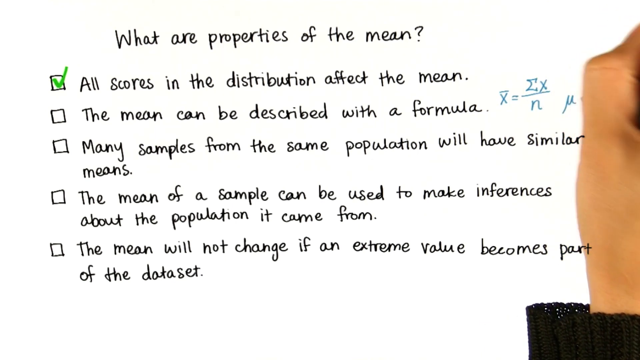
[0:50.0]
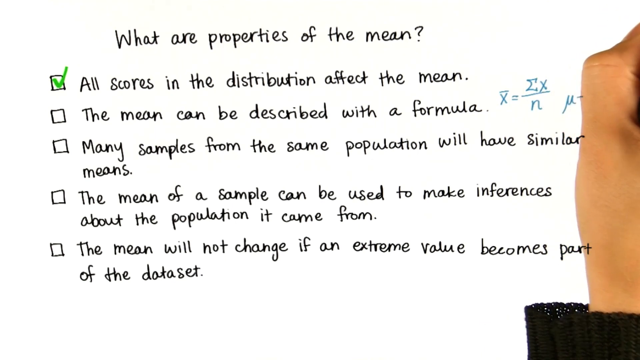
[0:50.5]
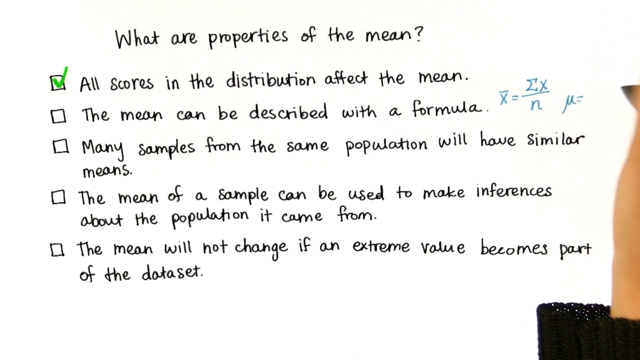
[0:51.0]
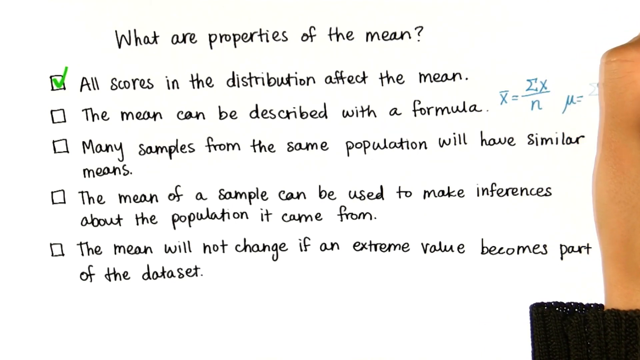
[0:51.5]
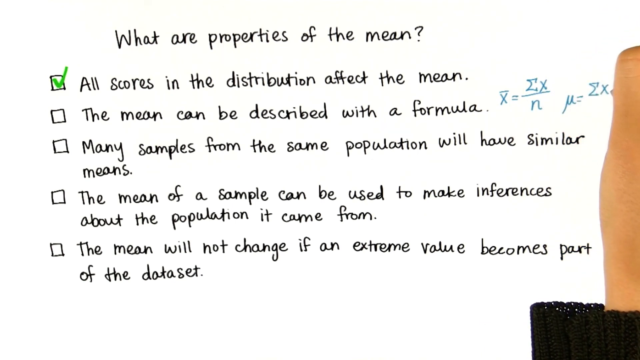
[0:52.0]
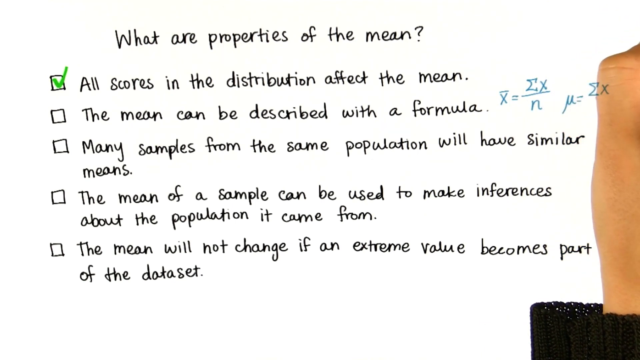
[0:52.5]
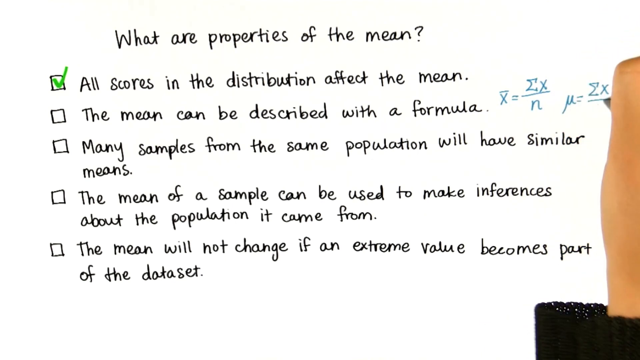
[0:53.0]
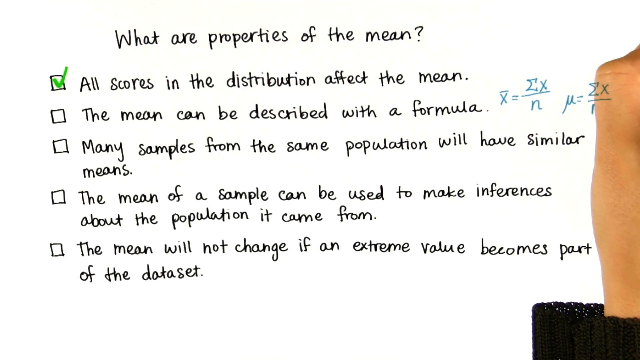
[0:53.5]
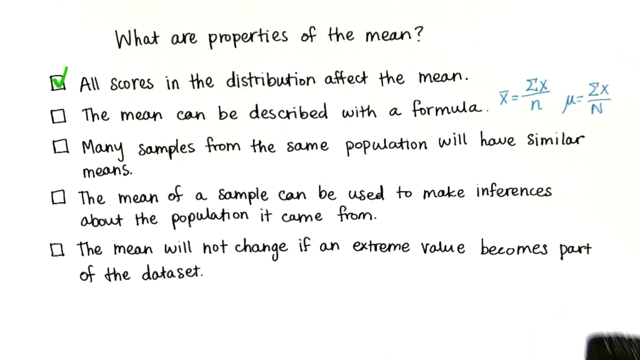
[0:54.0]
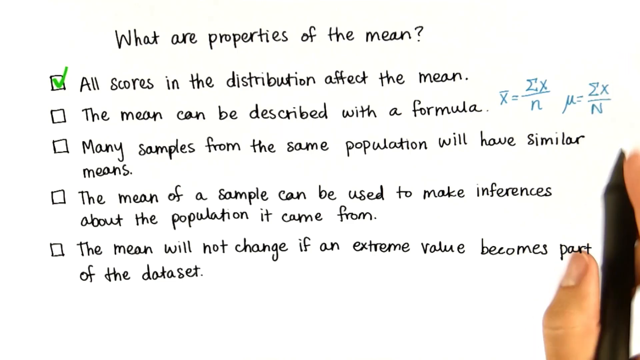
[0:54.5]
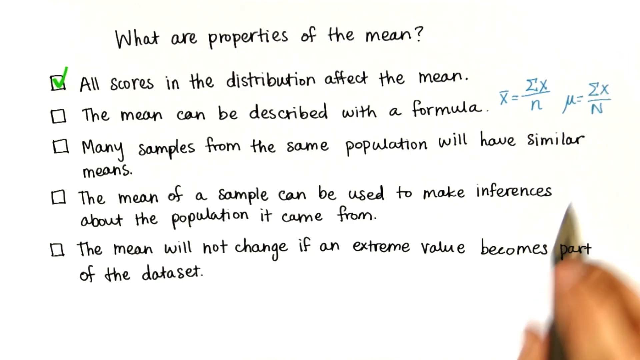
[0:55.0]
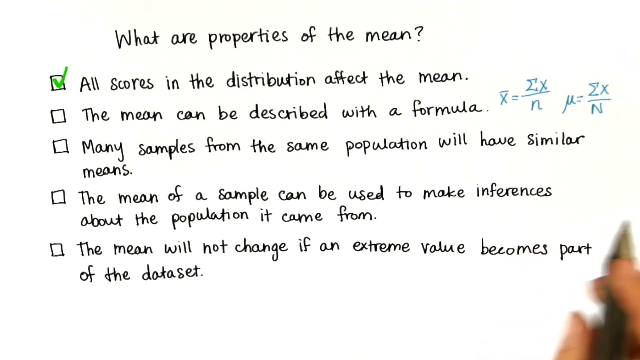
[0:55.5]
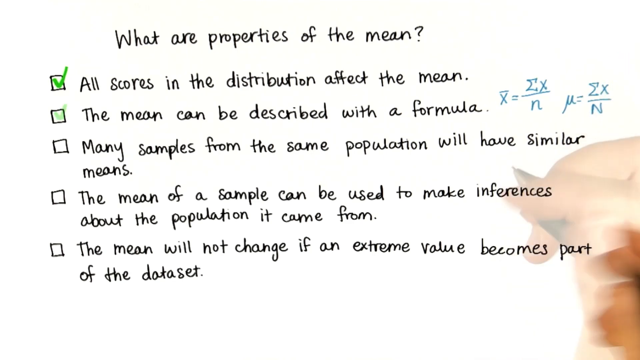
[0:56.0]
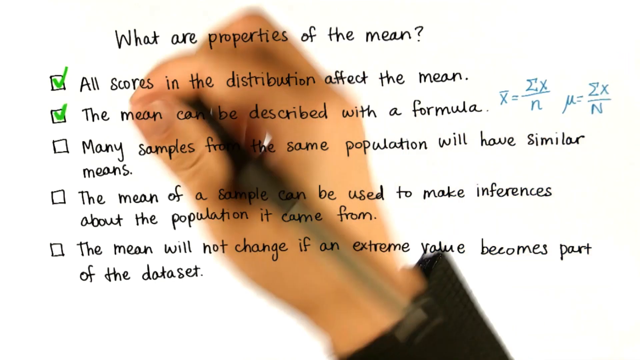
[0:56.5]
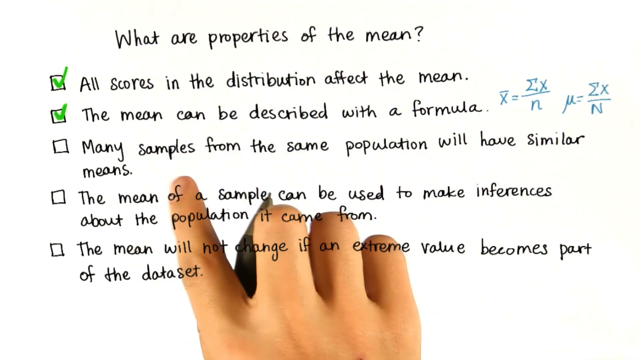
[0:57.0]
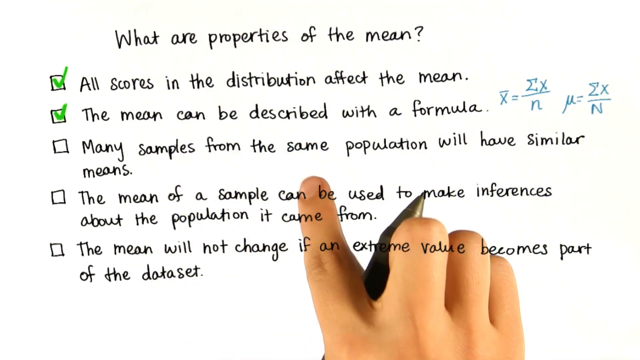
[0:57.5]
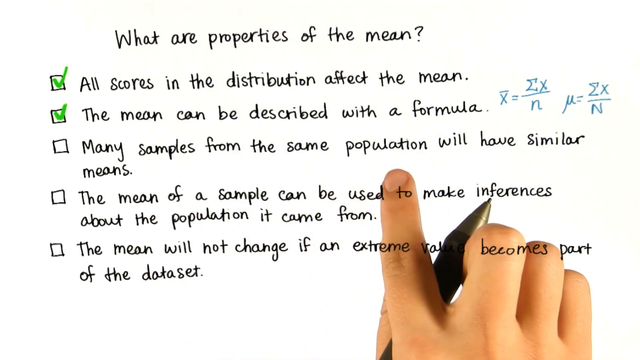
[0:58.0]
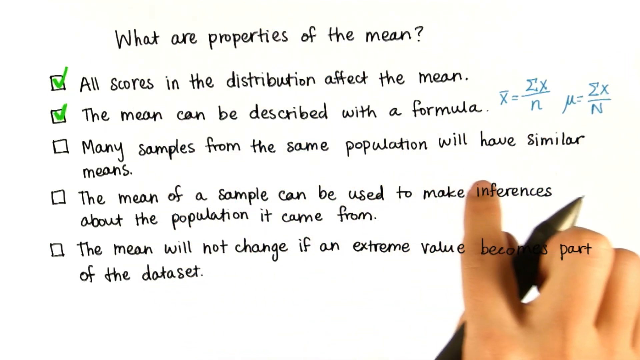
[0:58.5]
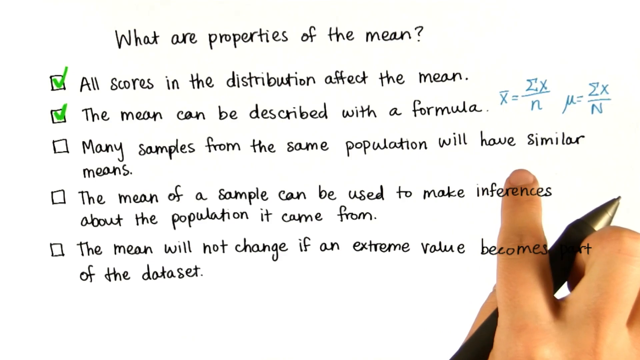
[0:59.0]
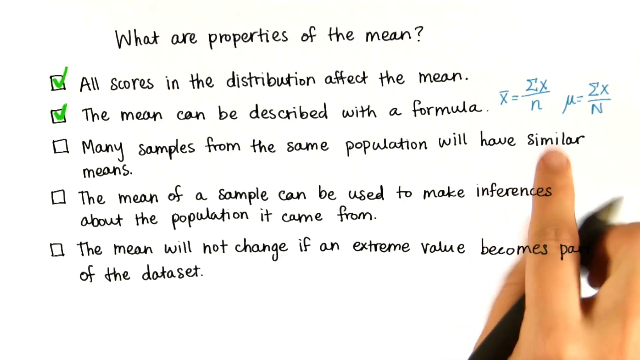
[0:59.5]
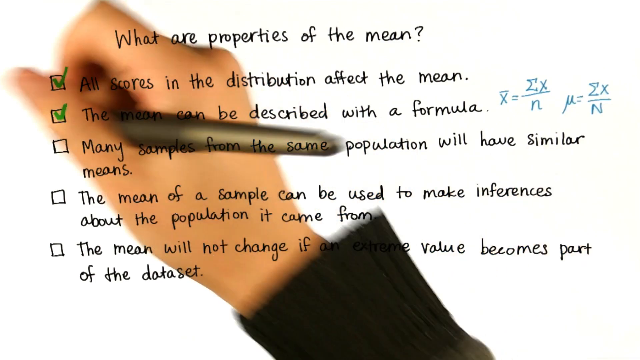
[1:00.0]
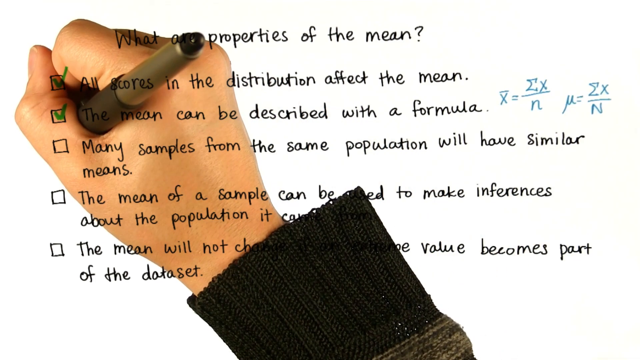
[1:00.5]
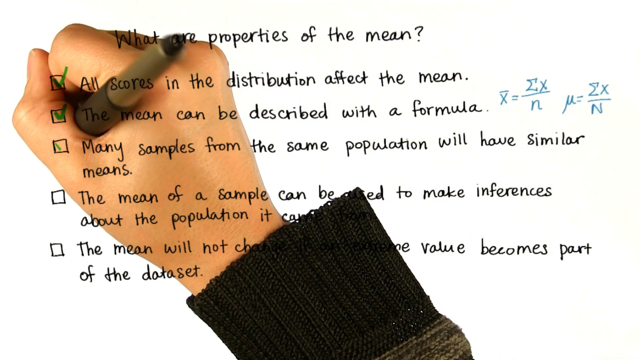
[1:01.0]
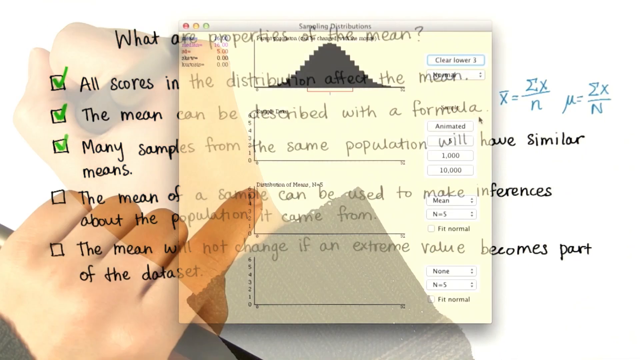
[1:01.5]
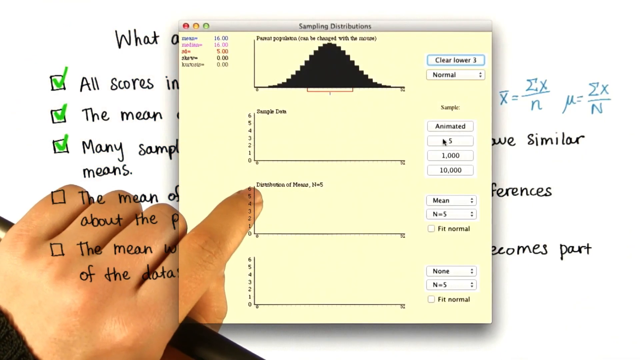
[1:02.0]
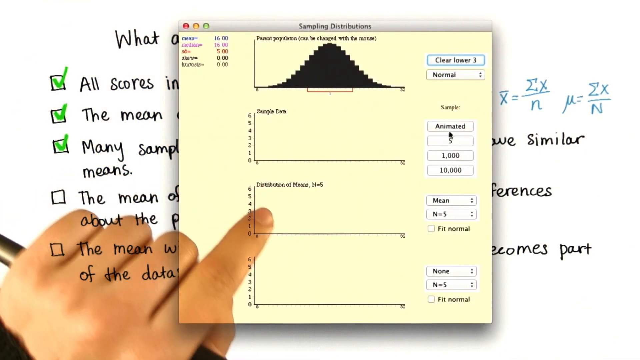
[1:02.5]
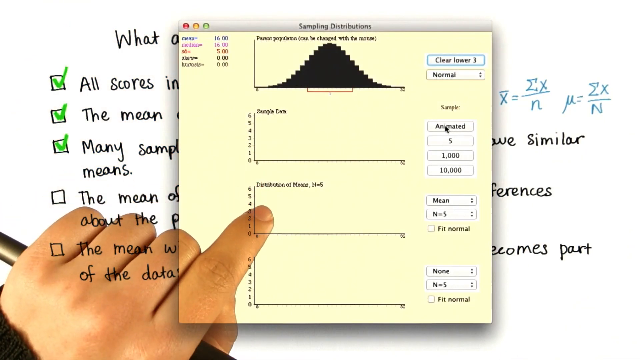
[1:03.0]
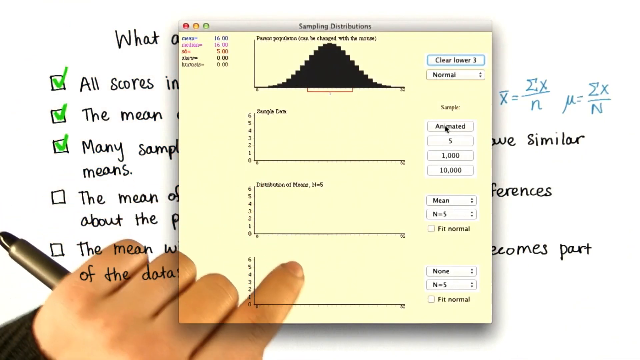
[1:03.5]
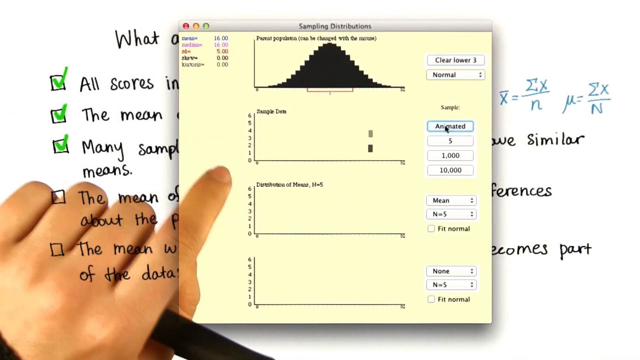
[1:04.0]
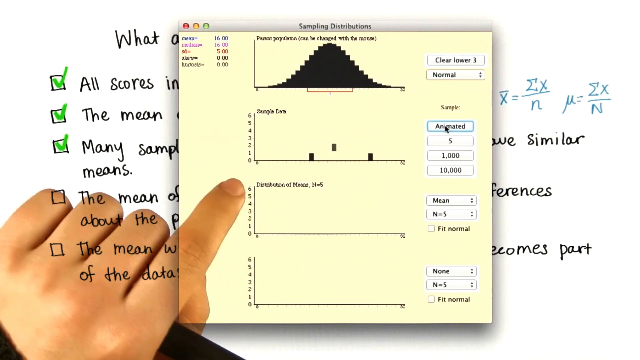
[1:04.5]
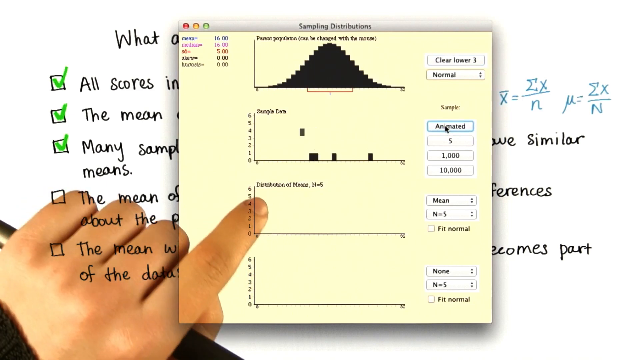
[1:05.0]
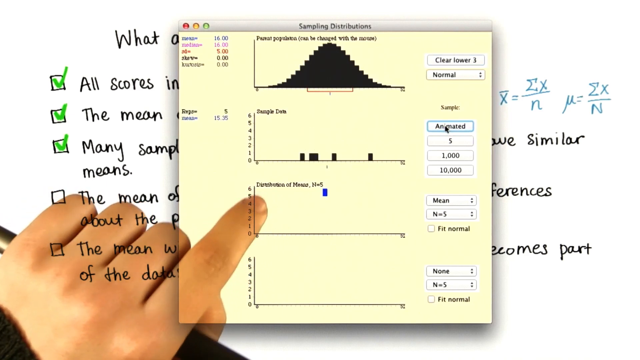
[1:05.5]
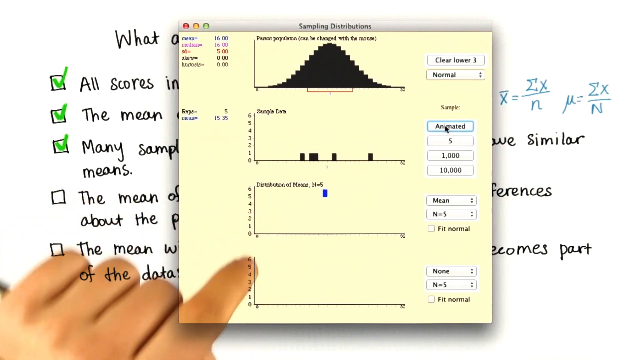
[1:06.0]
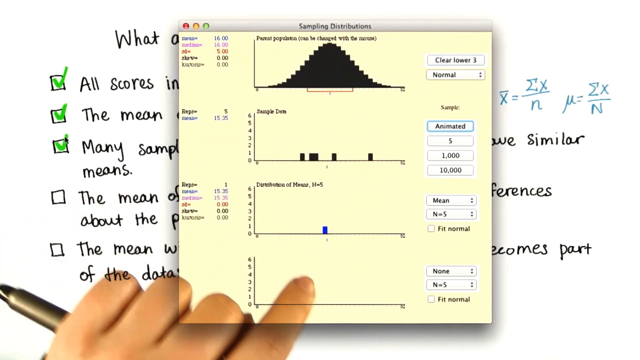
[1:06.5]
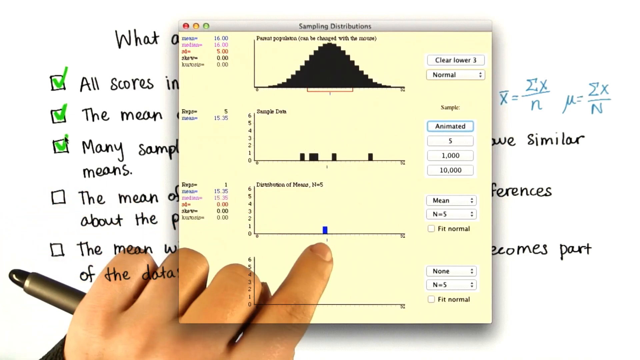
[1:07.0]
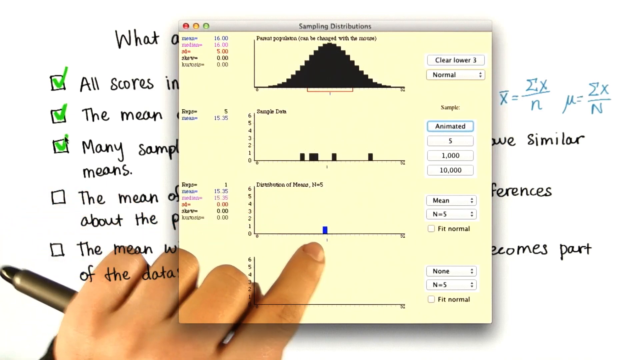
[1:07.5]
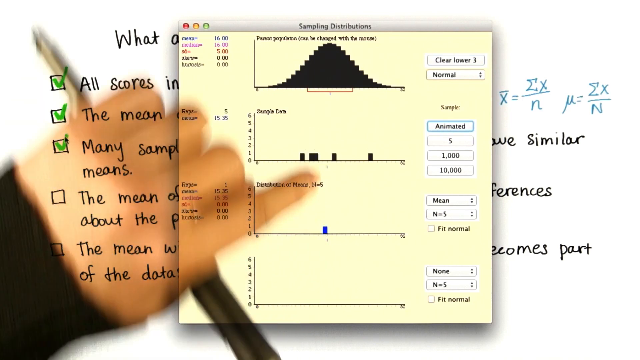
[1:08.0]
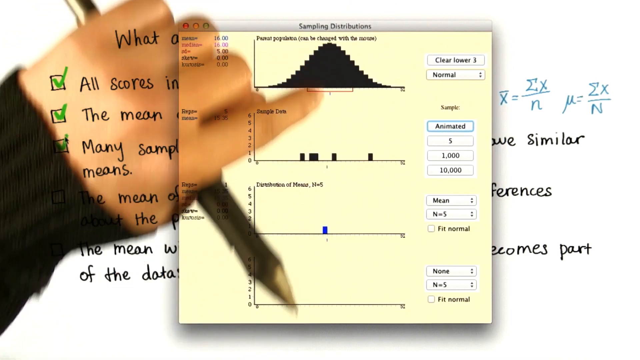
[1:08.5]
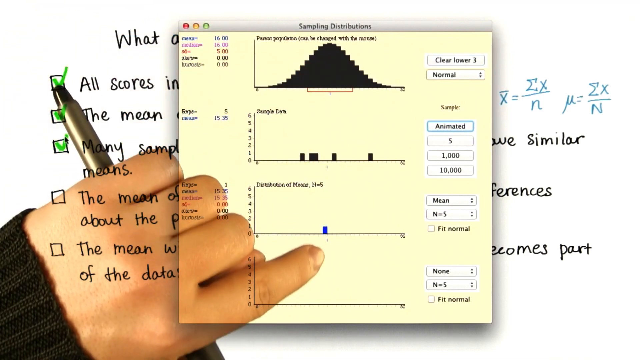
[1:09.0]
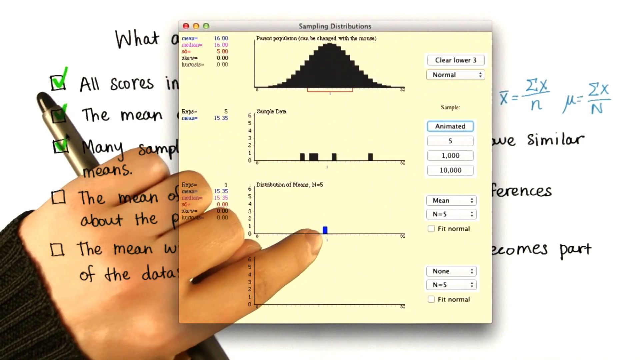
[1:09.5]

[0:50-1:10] A whiteboard shows the title "What are Properties of the Mean?" with five bullet points of text underneath. Each bullet point begins with a white square, and the first point is already checked off with a green checkmark. The person writes two equations on the far right side of the second bullet point, moves his pen back and forth, and then checks off the second box. He moves his index finger around the third bullet point and starts writing. The view then transitions to a graph on what seems to be a Mac computer; the box is a video titled "Sampling Distribution". The person scrolls vertically along the graph as more points get populated on it, and he points specifically at the third graph.